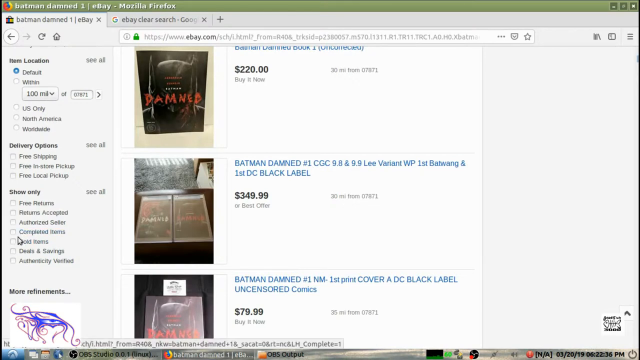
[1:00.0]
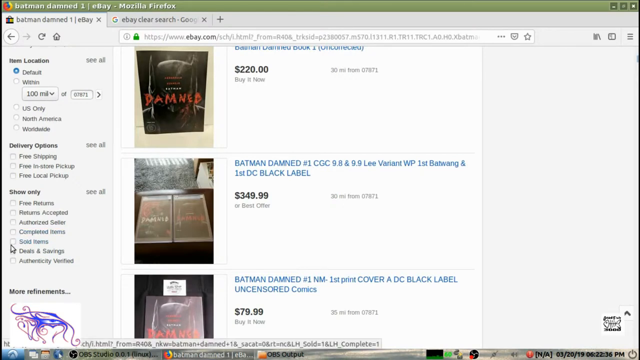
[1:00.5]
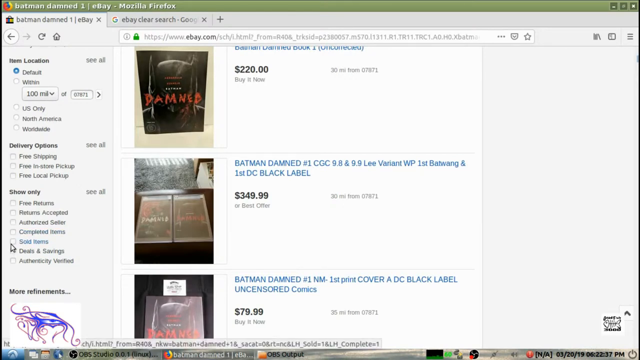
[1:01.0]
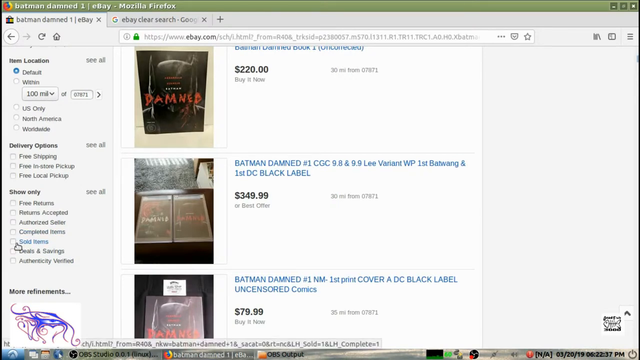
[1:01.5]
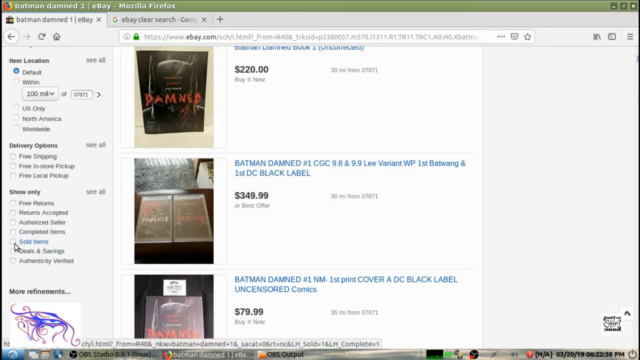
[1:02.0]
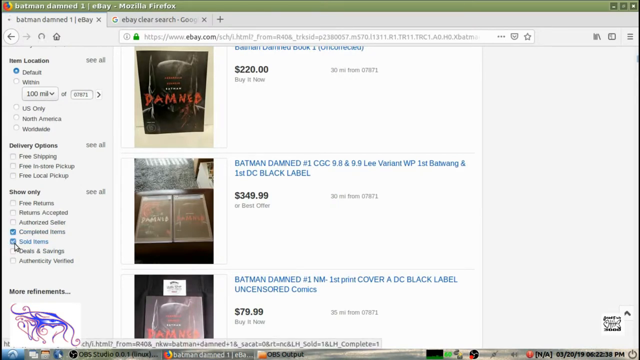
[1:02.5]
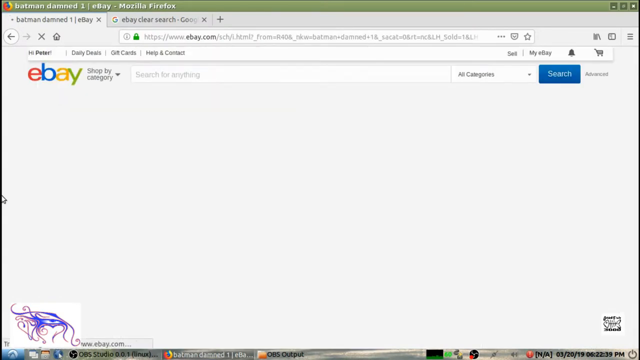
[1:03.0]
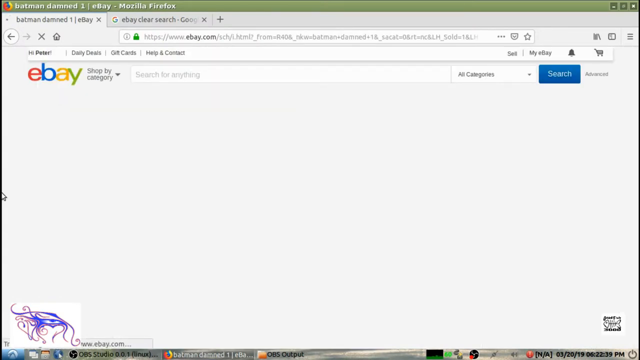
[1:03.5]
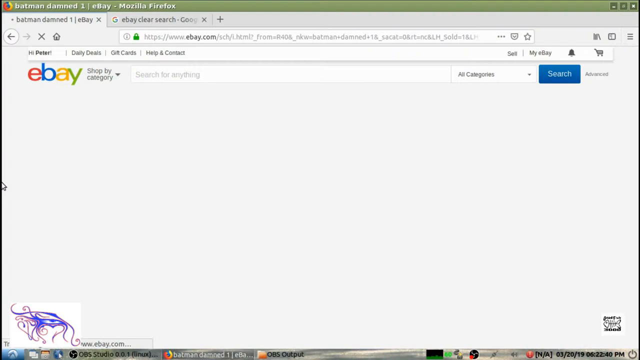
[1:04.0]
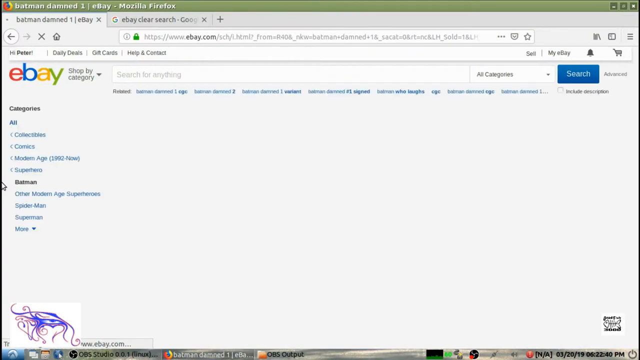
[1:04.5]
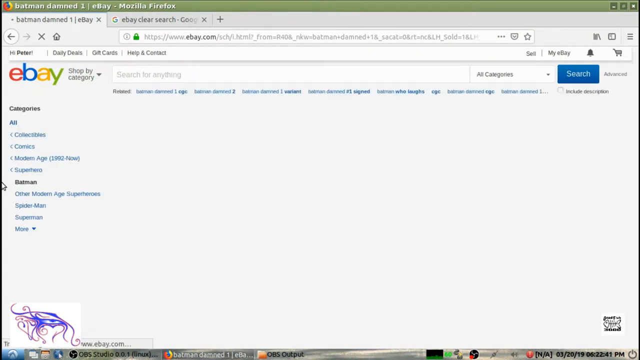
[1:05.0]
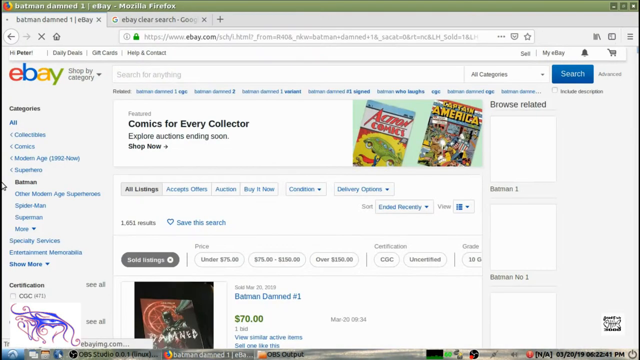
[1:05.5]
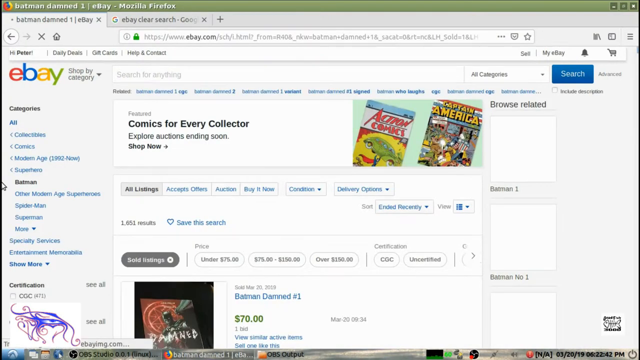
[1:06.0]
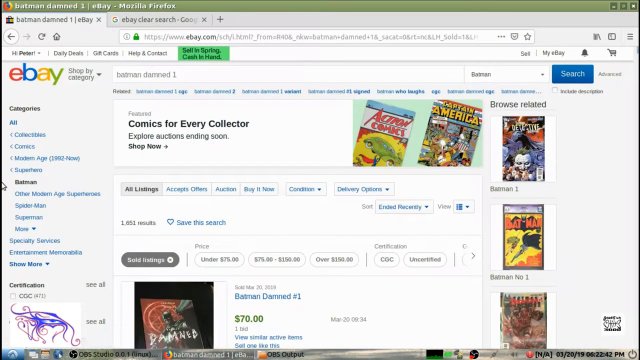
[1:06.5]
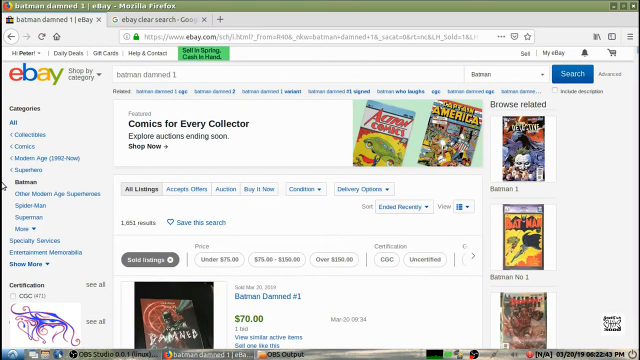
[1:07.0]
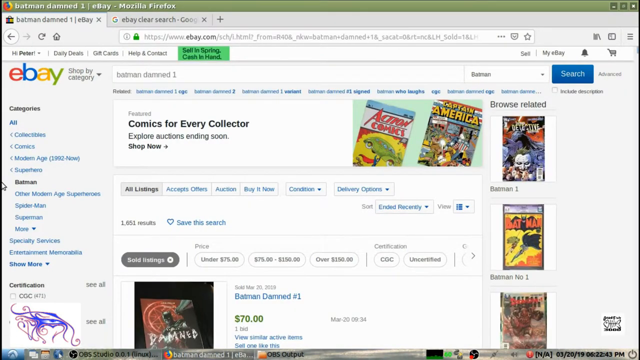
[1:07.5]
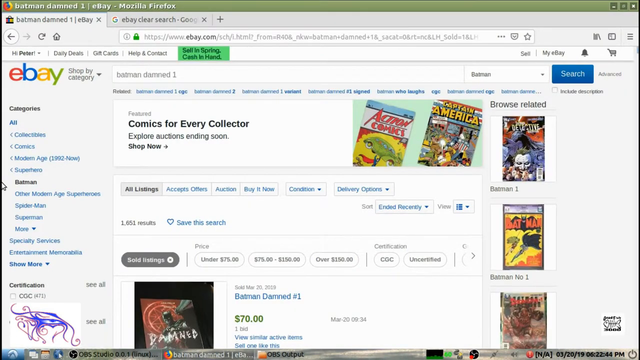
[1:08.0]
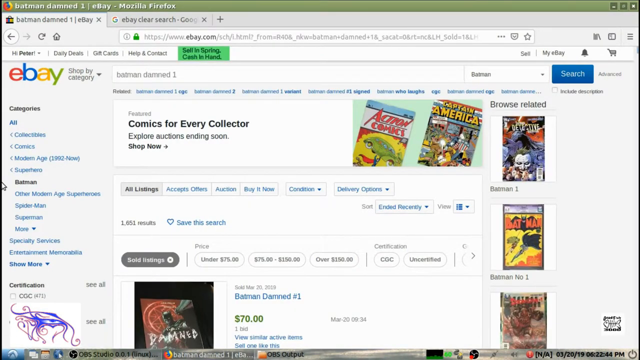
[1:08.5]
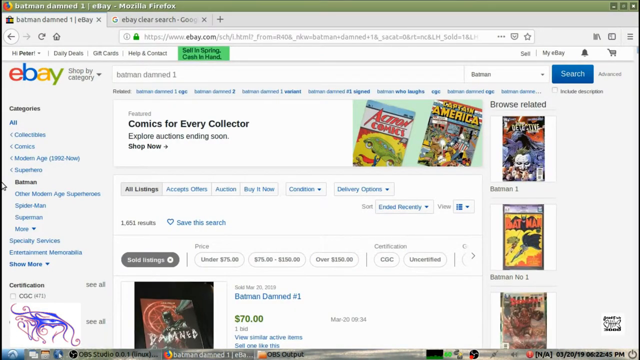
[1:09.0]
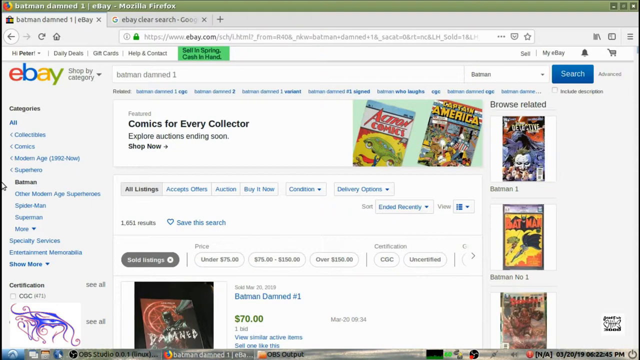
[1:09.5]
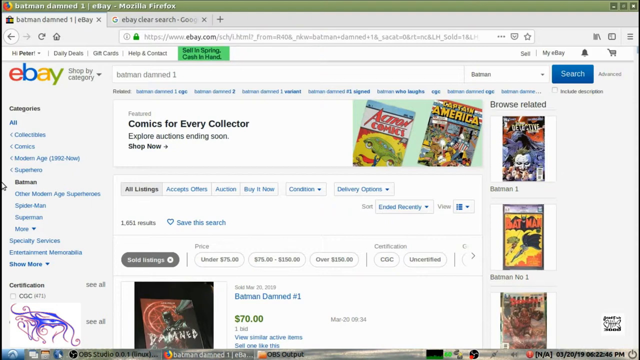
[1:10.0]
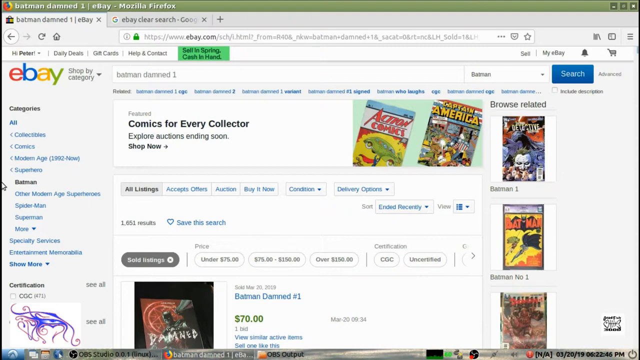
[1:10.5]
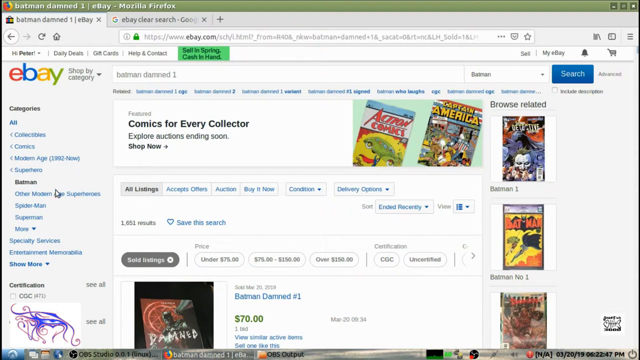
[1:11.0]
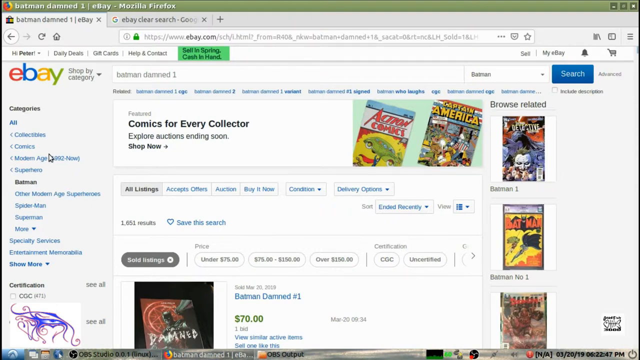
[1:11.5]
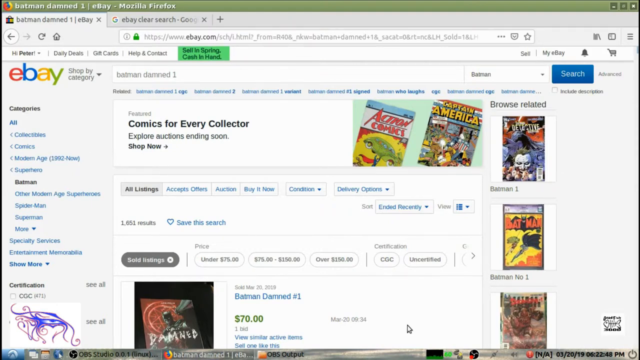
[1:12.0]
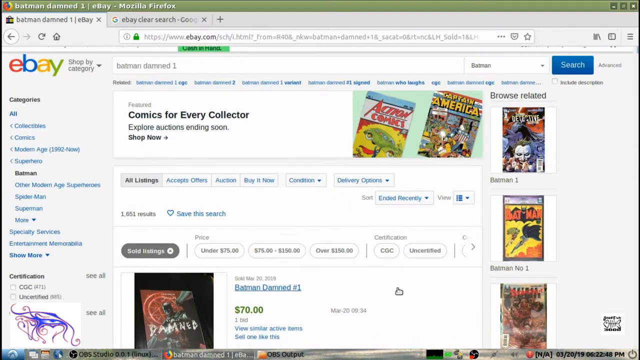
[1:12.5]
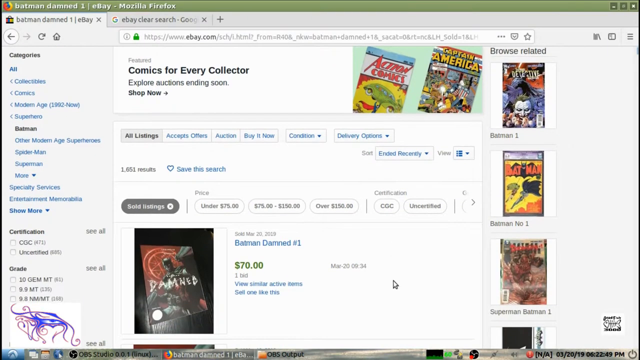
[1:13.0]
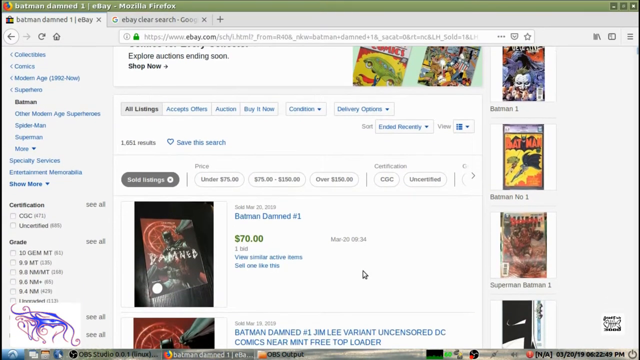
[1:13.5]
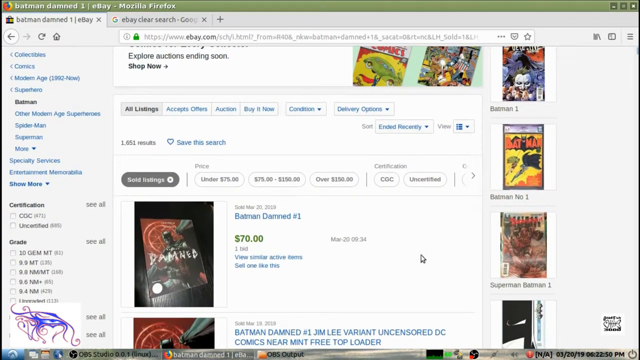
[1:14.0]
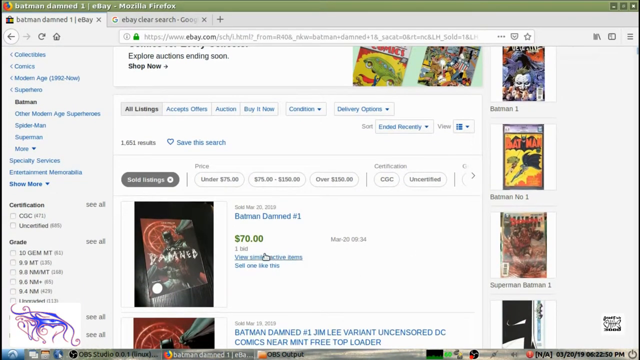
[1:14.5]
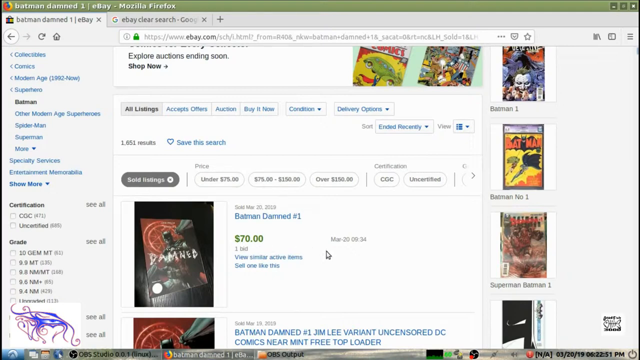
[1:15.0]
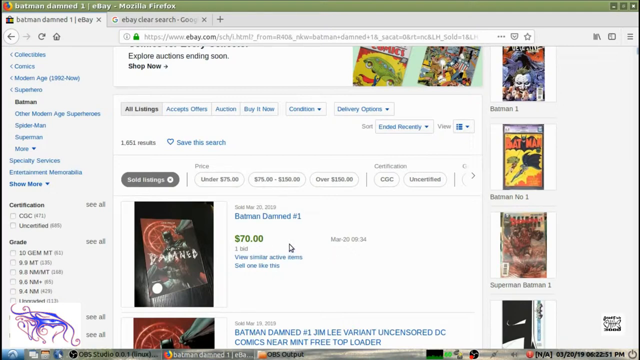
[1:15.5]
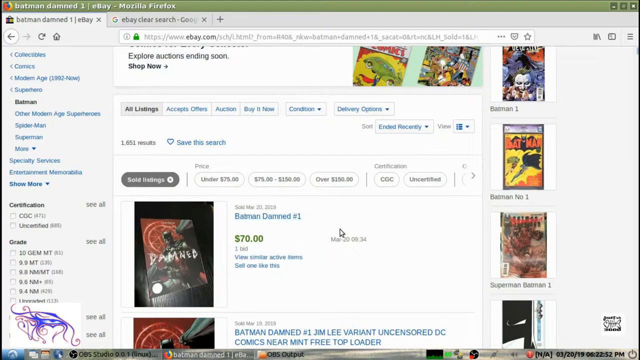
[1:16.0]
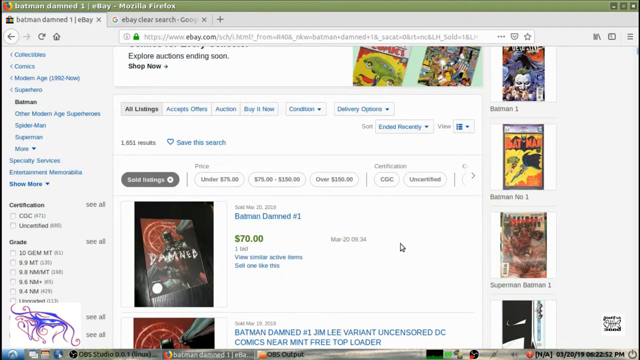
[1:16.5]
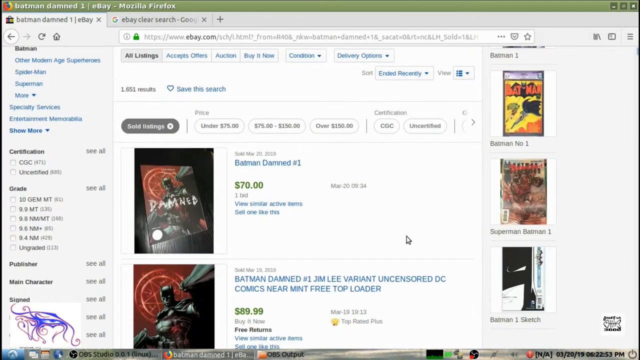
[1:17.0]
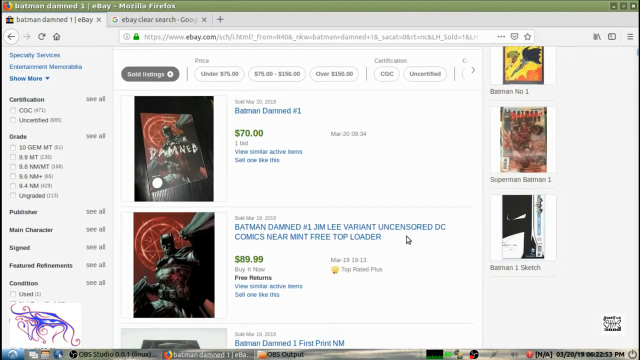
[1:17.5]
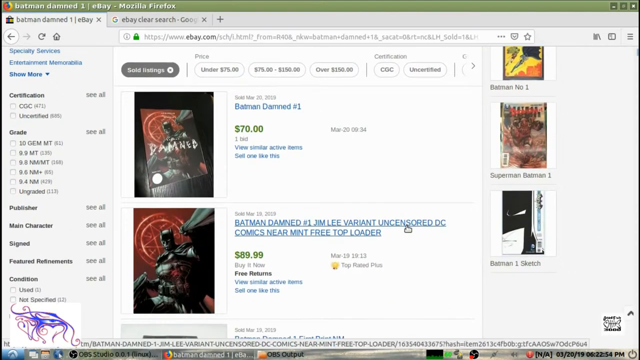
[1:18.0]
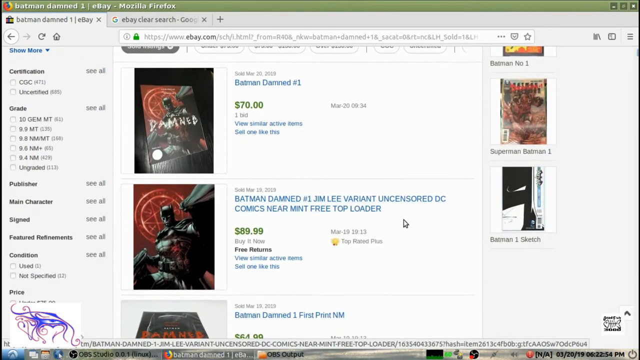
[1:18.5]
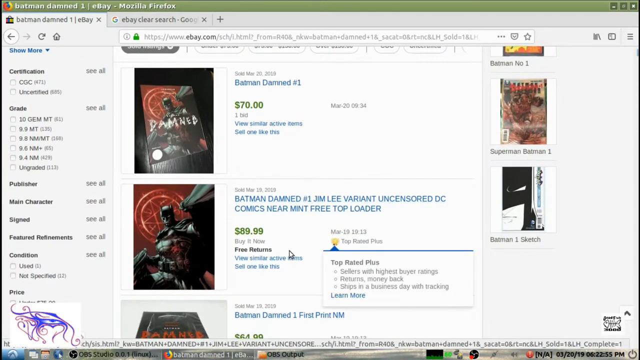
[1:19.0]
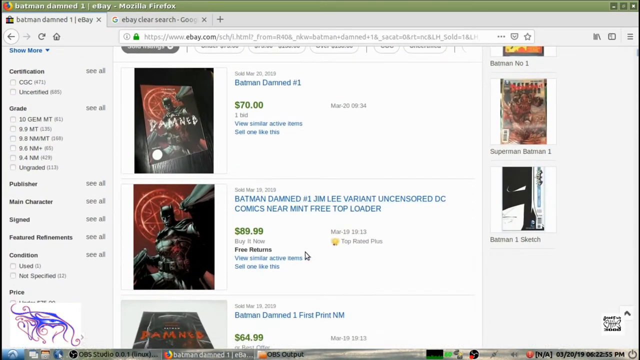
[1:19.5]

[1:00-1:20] The user moves the mouse pointer down to "sold items" and clicks two check boxes, one for completed items and one for sold items. The webpage reloads and shows the updated results, with a comic book called Batman Damned, number one at the bottom. The user moves the mouse pointer to the bottom right side and scrolls down, hovering over the first comic book, Batman Damned, number one, priced at $70 with one bid. Continuing to scroll, the user hovers over the second item, the same comic book, Batman Damned, number one, priced at $89.99.